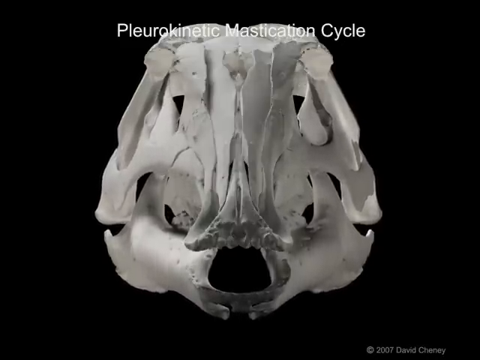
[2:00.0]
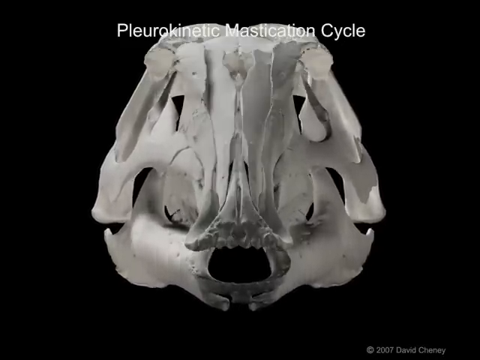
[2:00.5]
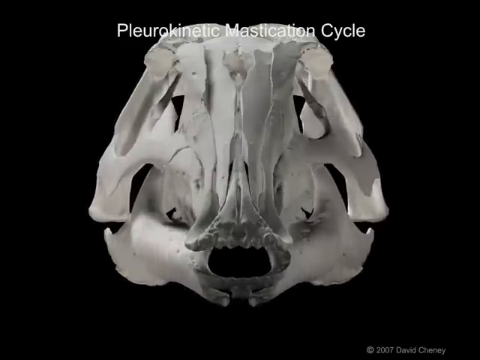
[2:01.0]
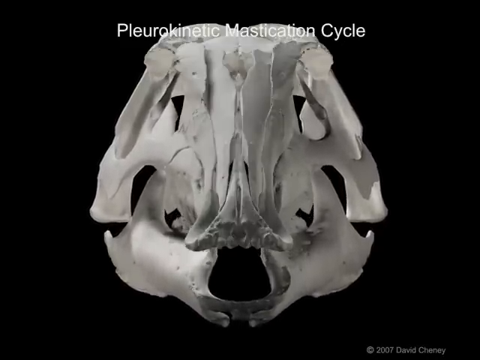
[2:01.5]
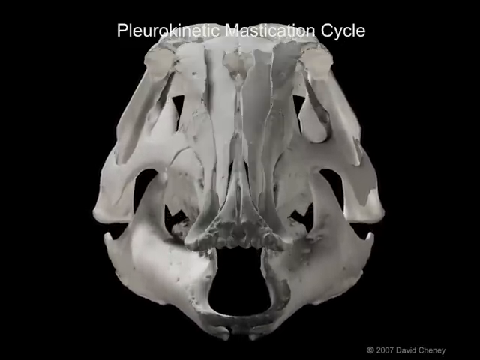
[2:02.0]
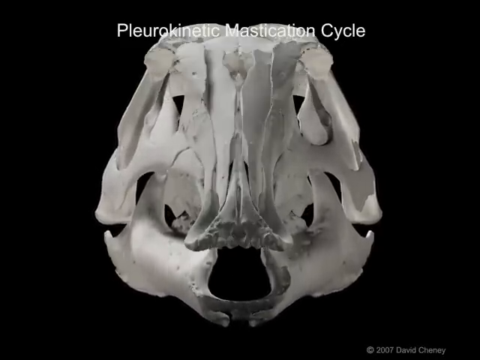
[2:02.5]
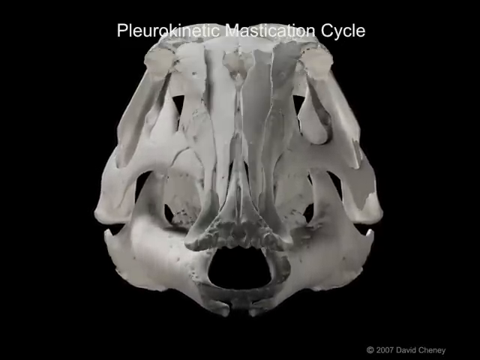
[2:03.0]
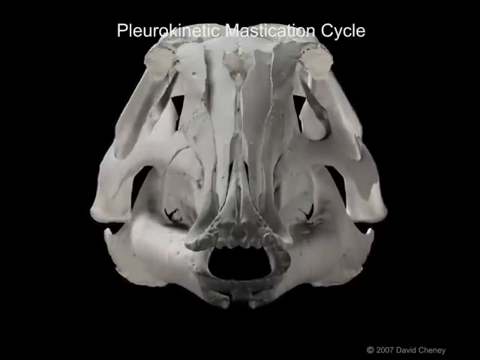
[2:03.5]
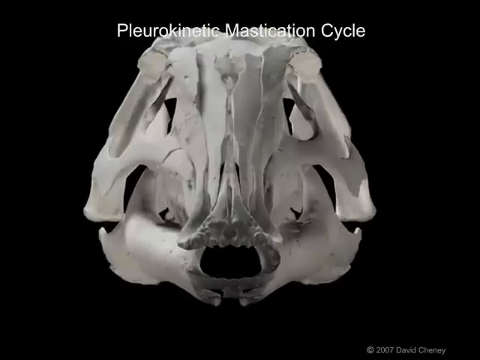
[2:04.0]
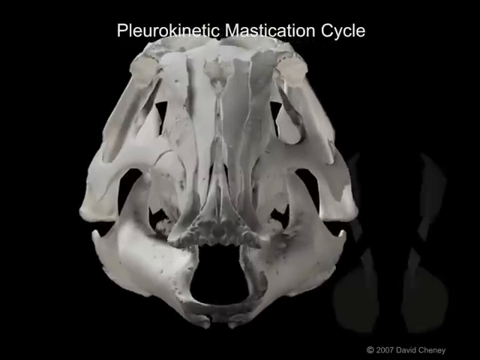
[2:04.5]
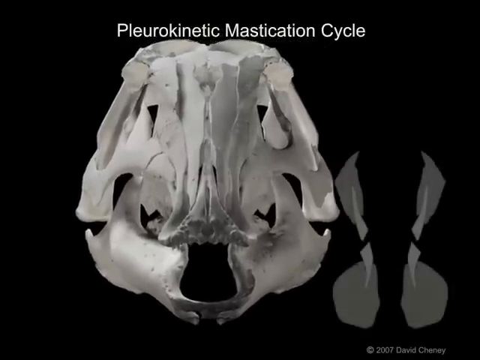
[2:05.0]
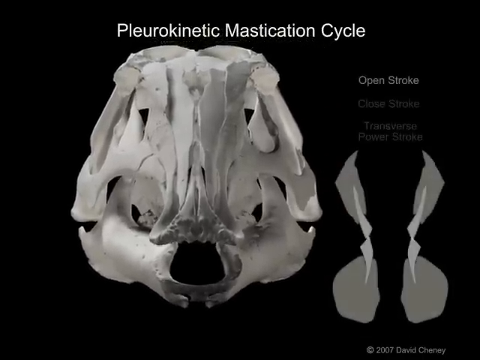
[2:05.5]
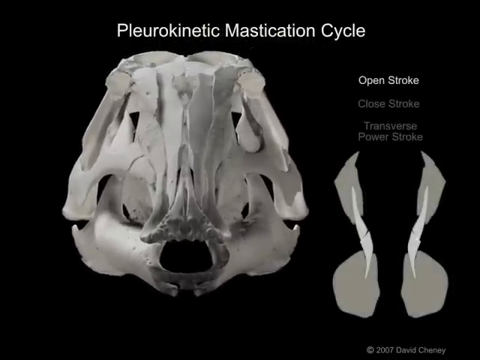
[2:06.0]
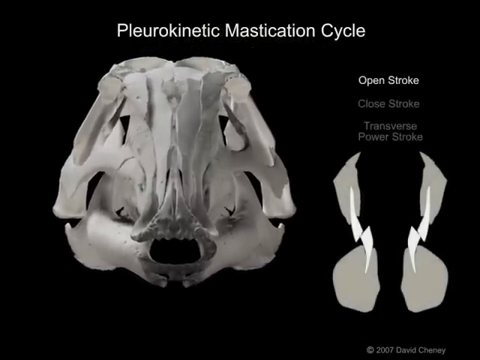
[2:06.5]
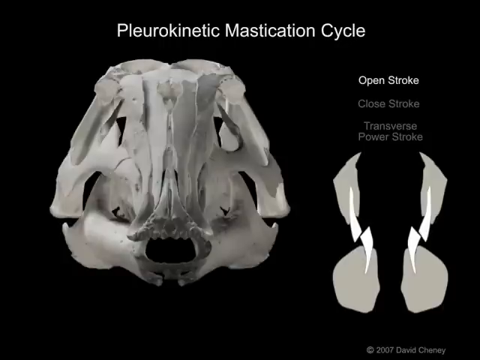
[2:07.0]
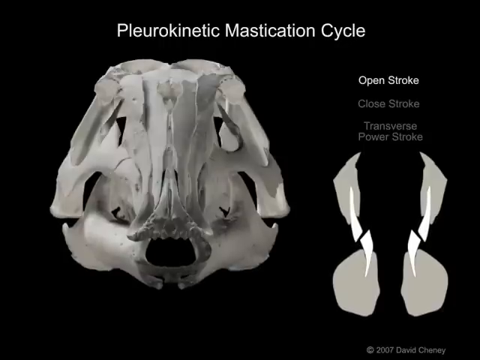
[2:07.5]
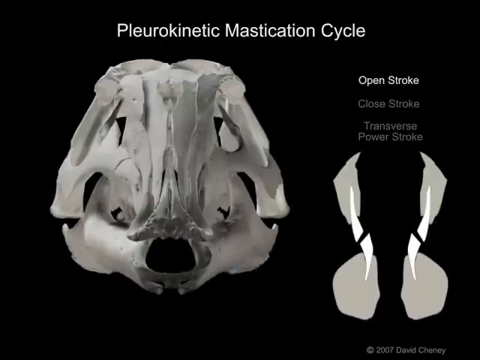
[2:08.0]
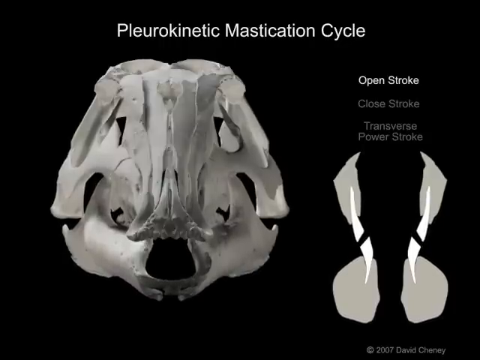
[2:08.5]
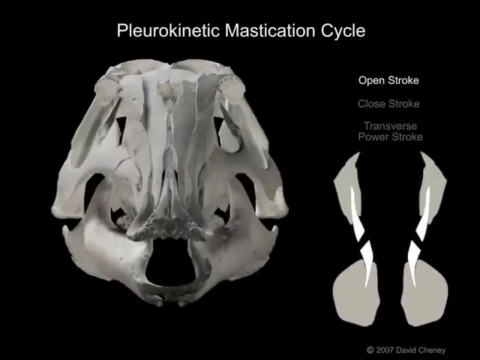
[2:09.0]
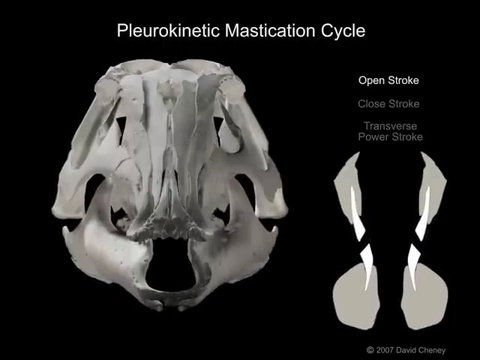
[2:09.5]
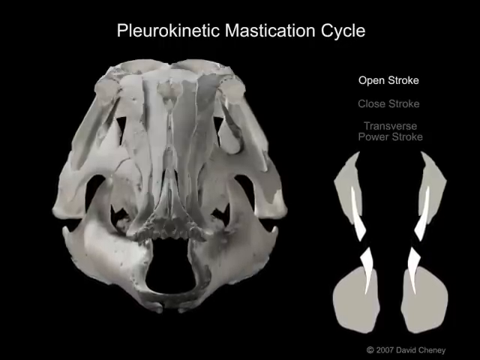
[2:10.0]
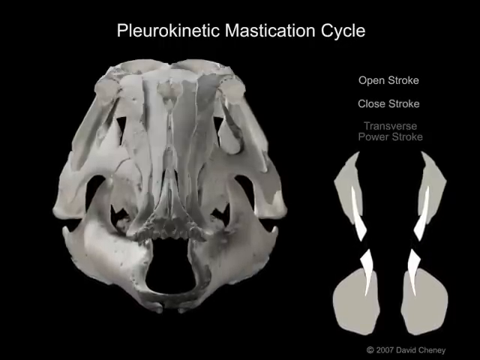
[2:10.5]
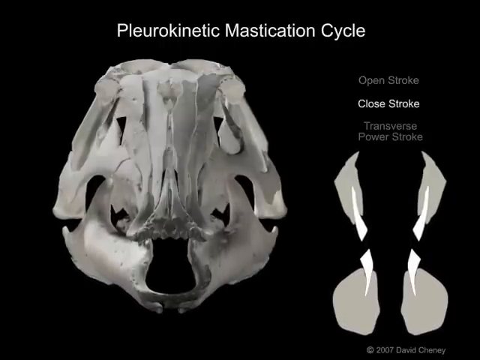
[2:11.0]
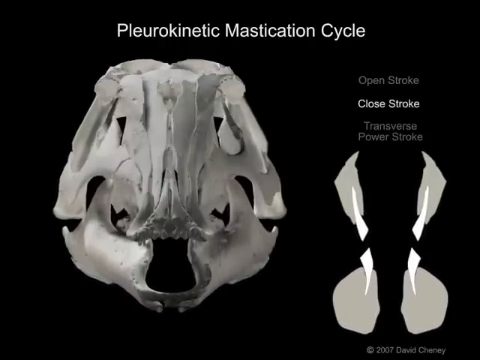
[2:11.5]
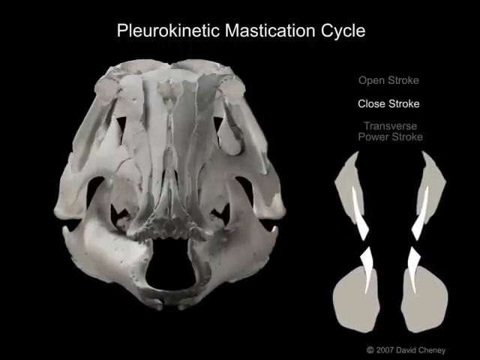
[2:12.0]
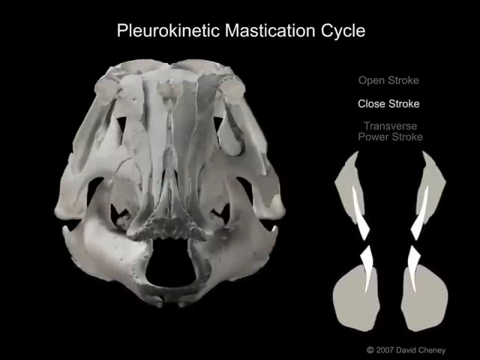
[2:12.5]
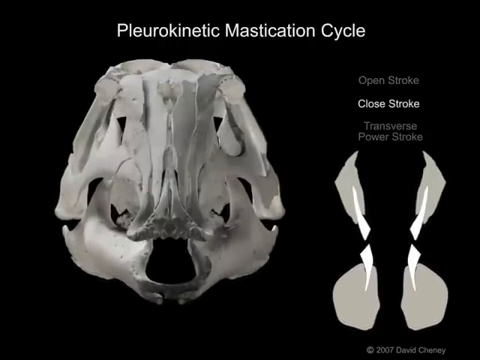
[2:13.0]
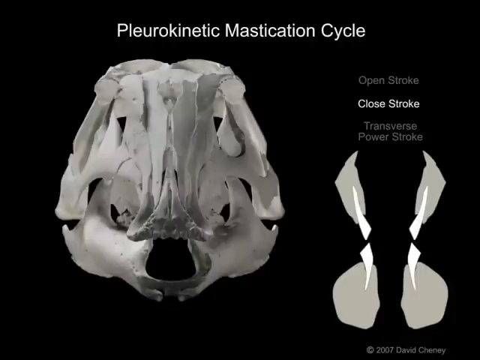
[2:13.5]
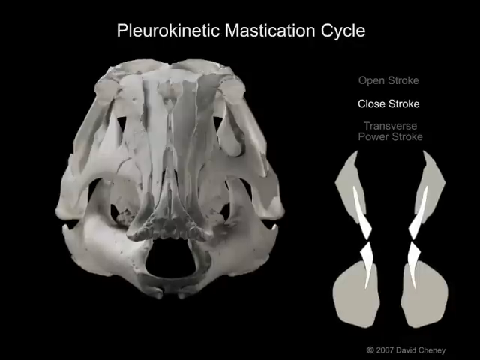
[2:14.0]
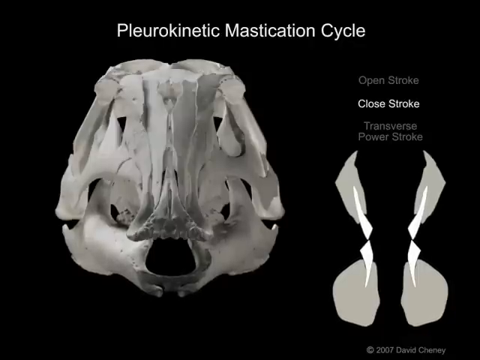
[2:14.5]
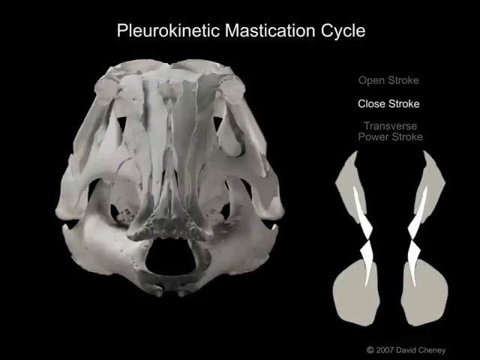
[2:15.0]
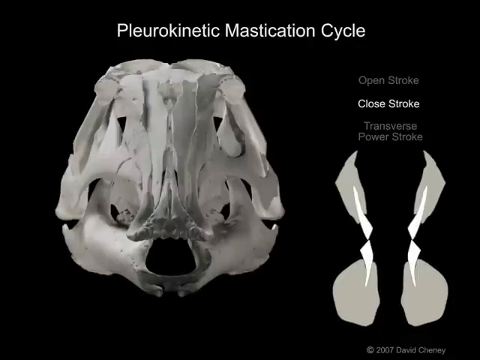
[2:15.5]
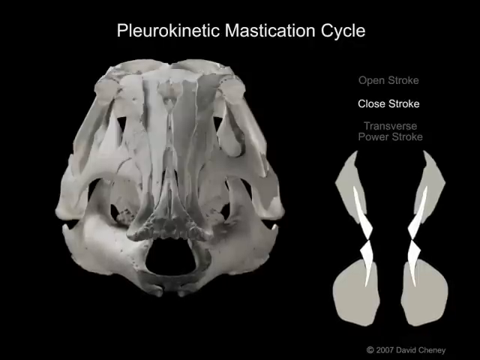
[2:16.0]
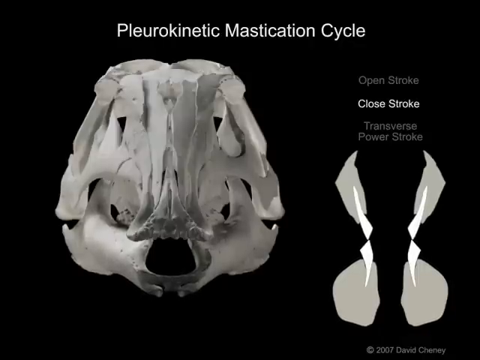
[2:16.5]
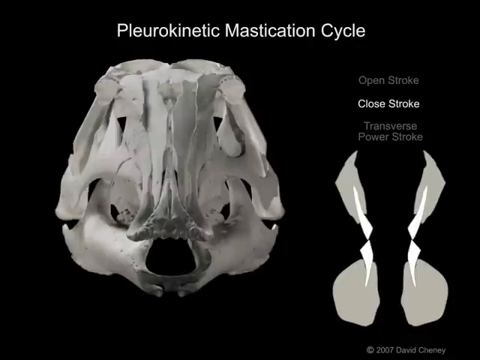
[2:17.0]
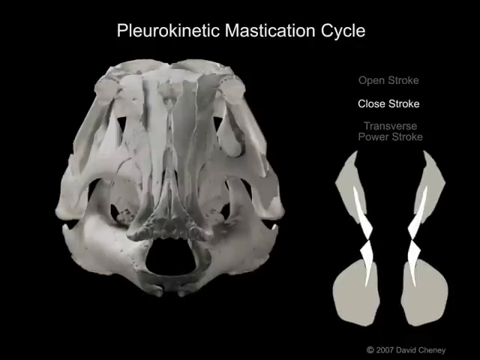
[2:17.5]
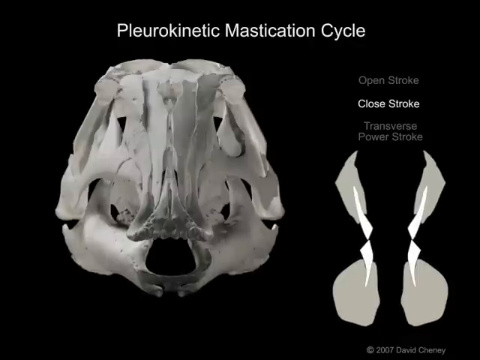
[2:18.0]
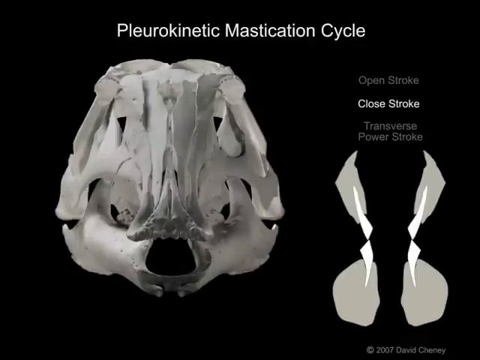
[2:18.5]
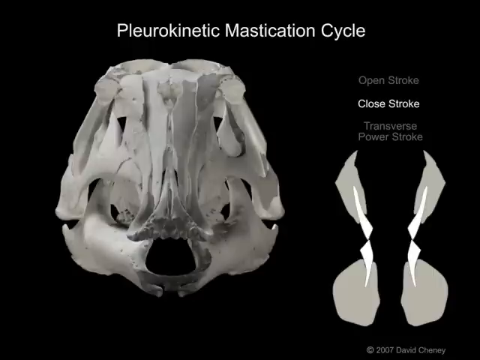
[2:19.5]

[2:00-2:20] The dinosaur skull faces directly toward the camera under the title "pleurokinetic mastication cycle," and the jaw opens and closes back and forth. The skull, which was in the middle of the screen, gets slightly smaller and moves toward the left side. On the right side, text reads "open stroke," then "closed stroke," then after some space "transverse power stroke," and what appear to be jaw lines are shown in action. When the skull on the left opens its mouth, the labeled parts on the right move as well and separate, then slowly come back together as the skull's mouth closes.